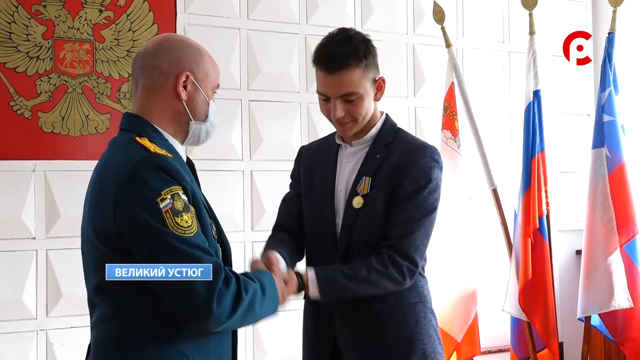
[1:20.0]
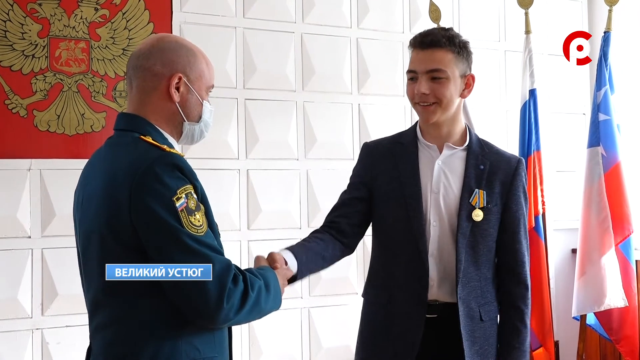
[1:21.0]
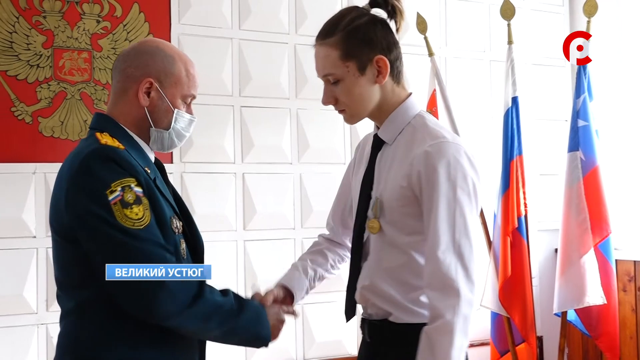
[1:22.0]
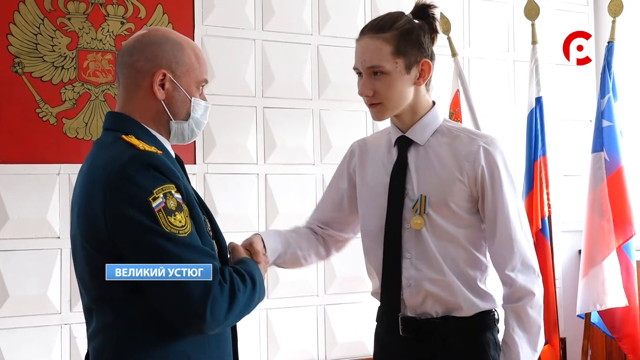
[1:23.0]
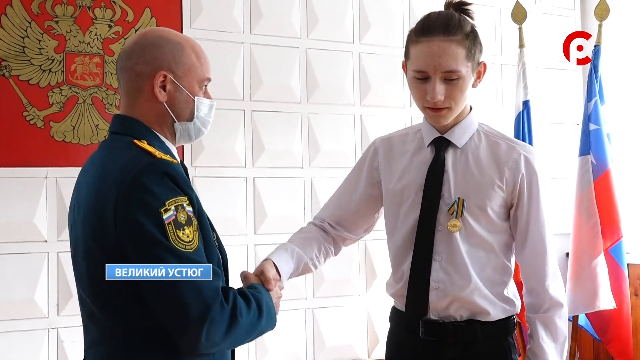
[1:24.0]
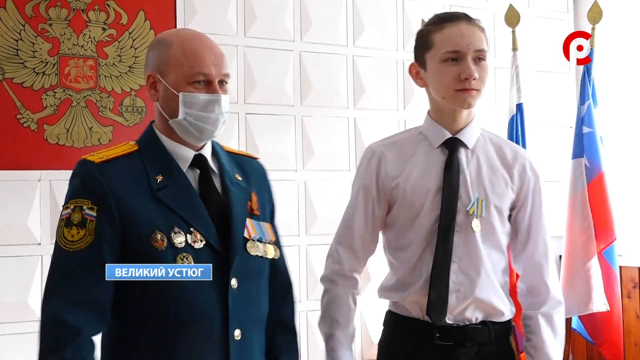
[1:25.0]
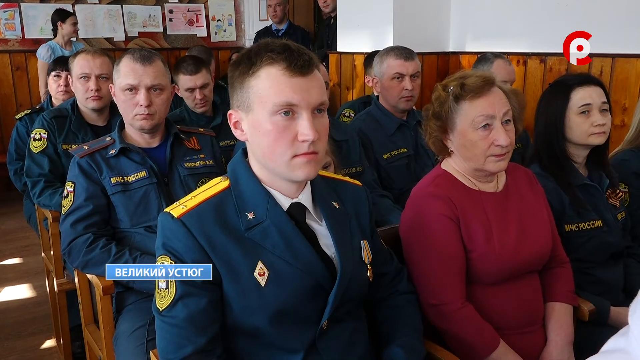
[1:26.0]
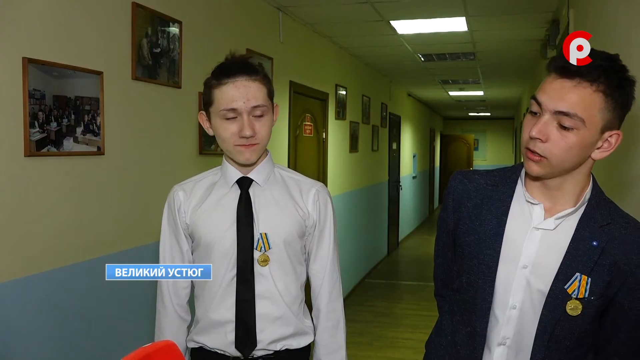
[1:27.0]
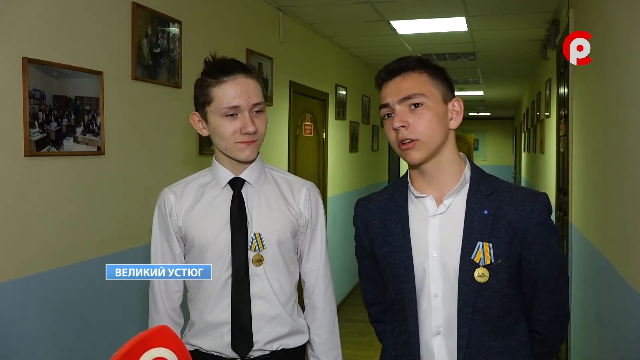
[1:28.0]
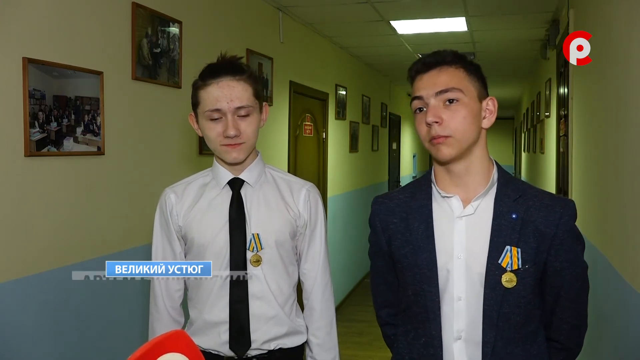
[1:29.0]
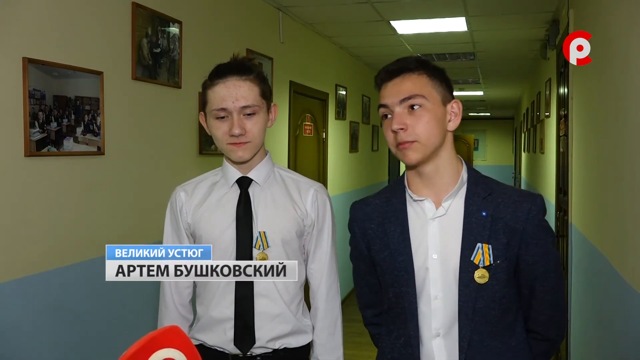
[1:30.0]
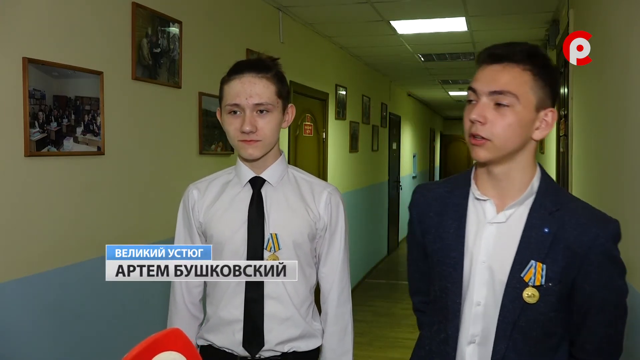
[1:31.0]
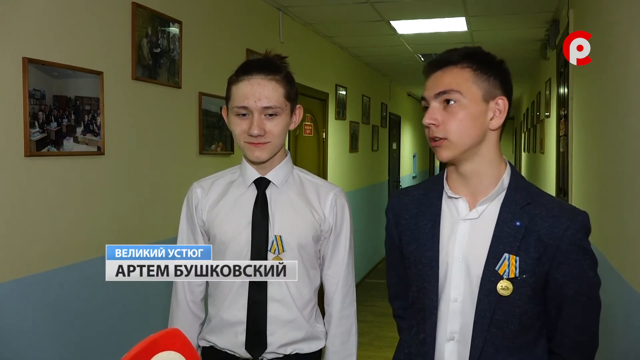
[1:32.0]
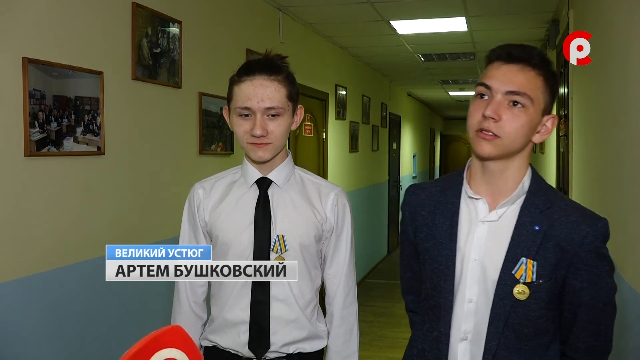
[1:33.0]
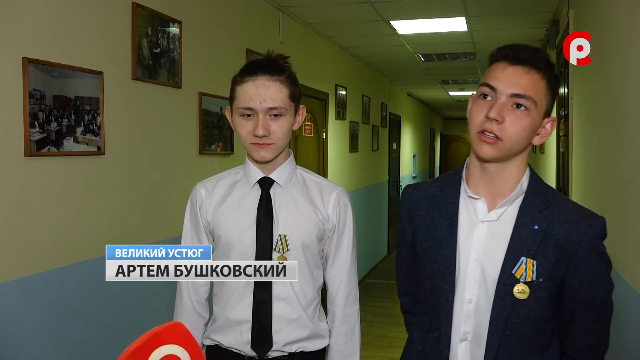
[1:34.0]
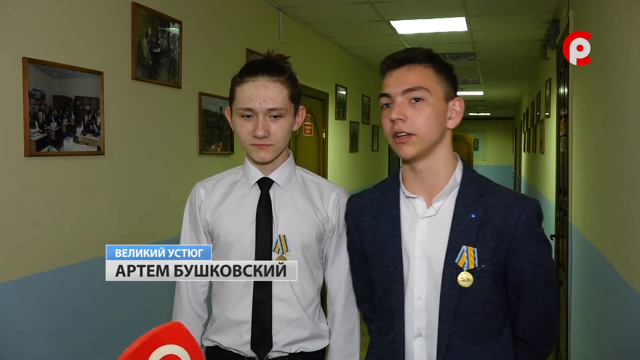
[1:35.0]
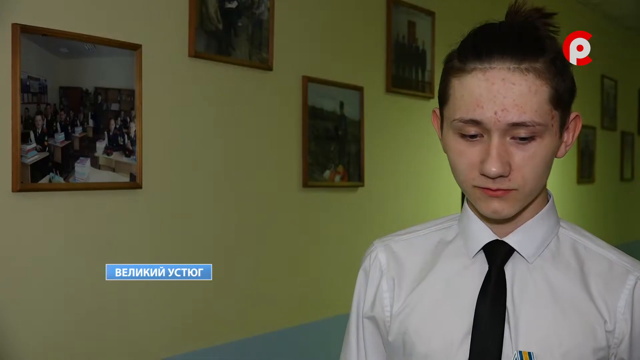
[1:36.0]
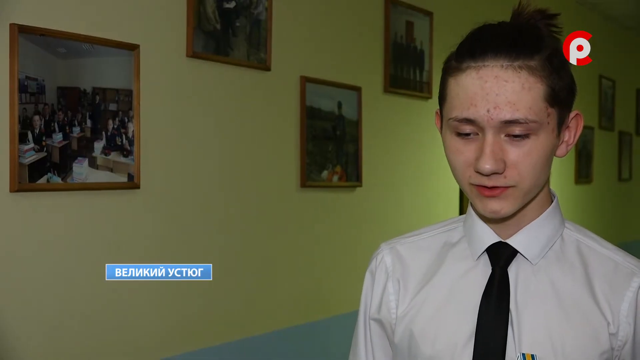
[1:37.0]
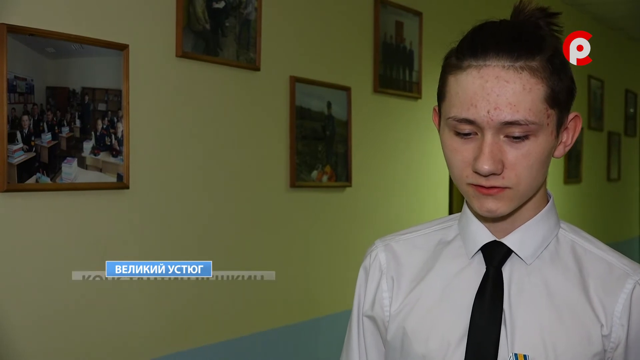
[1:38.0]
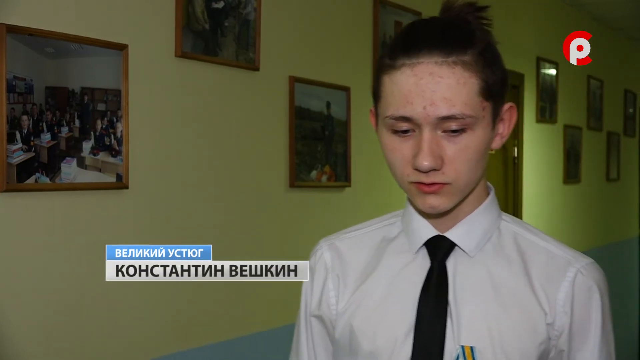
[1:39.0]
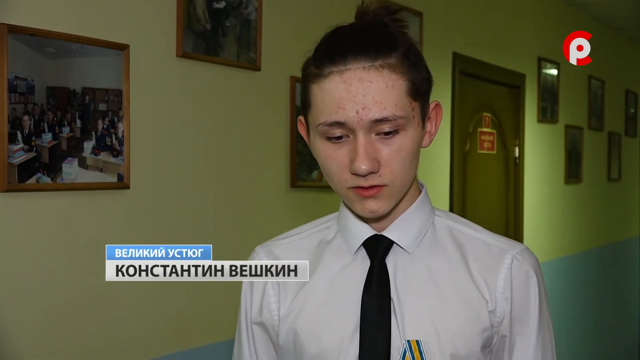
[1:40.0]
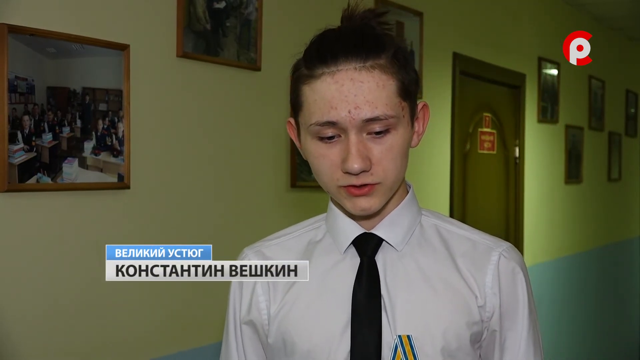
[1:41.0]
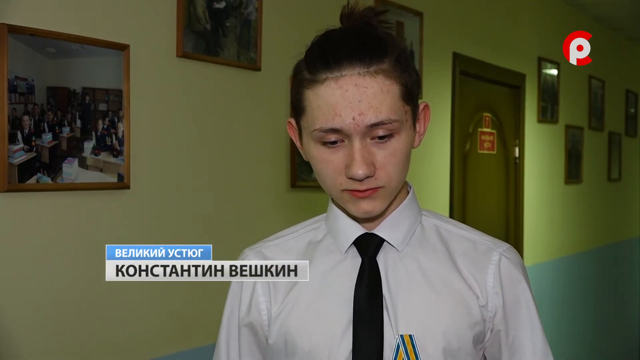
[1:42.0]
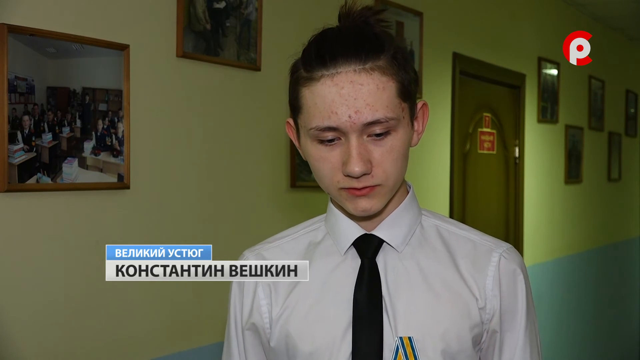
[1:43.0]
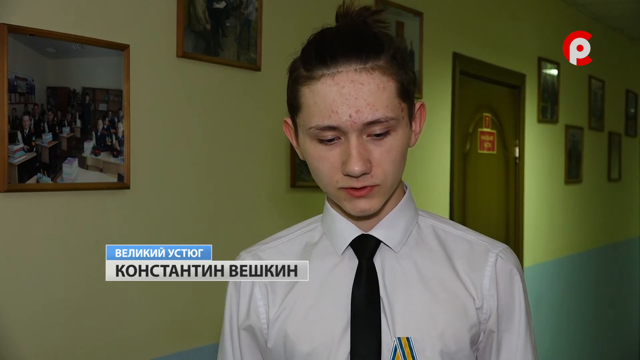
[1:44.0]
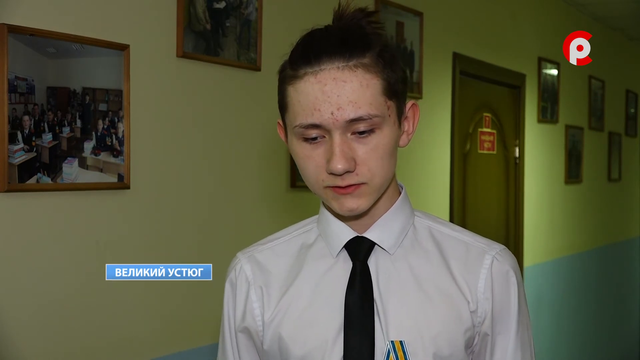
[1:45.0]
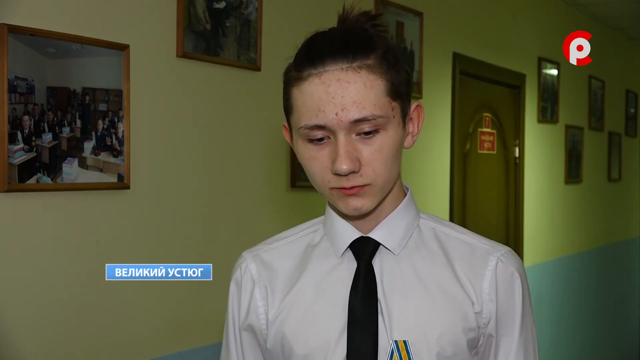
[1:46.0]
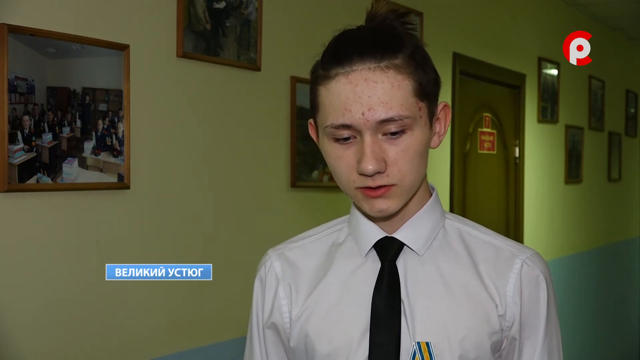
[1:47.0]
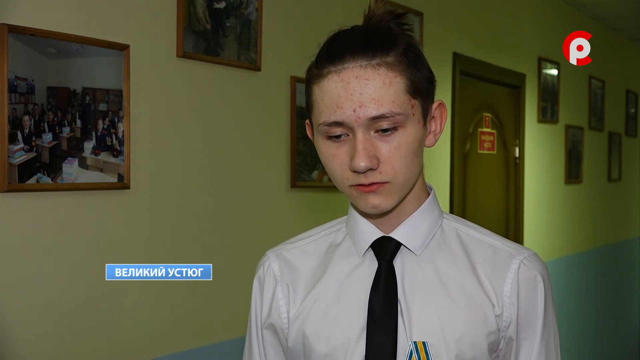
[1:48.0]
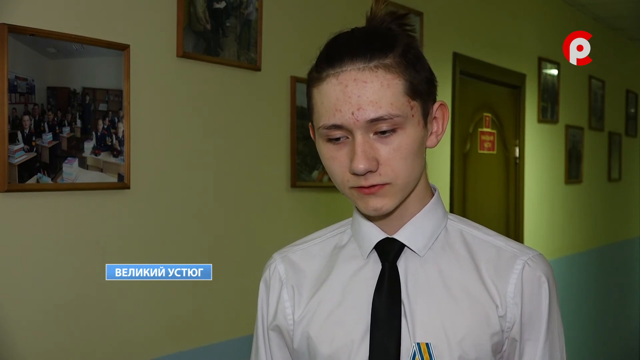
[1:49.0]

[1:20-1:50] The medals continue to be handed out, and the video cuts briefly to the crowd and then to two of the teens who received medals as they are interviewed, apparently talking about the experience or what they have done. The interview takes place in a hallway with multiple doors along it. Pictures hang in the hallway, including one of the same room seen earlier but with different people, and another that seems to show people out in public. The walls are two-tone, bluish on the bottom half and a kind of Easter-like yellow on the top half. The ceiling is an office-style panel ceiling with foam panels and school-style lighting running down the middle. The floor is not clearly visible. A channel logo appears, a P with a red C kind of behind it, the two letters intertwined into one.